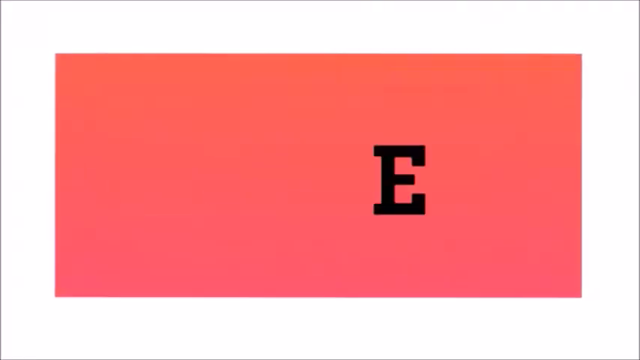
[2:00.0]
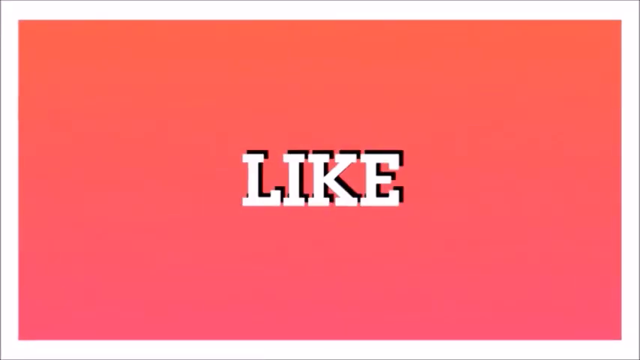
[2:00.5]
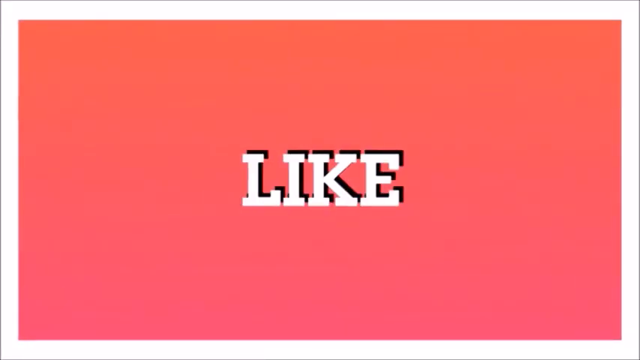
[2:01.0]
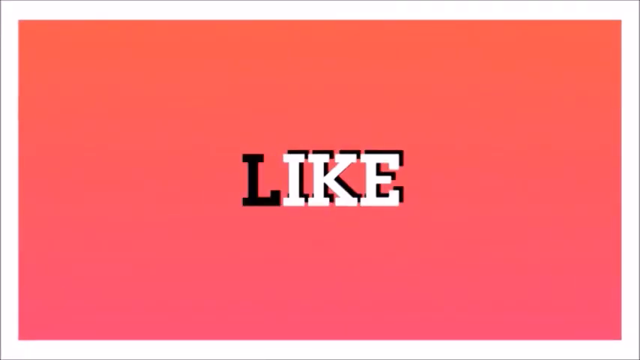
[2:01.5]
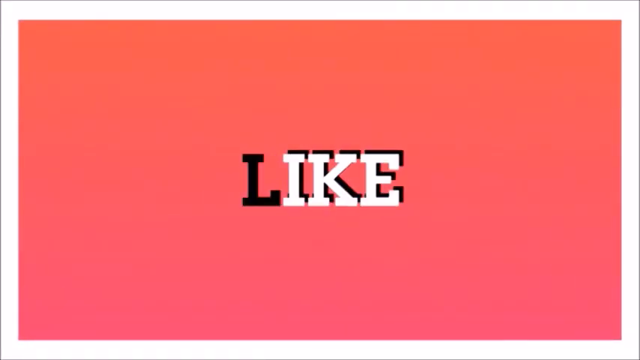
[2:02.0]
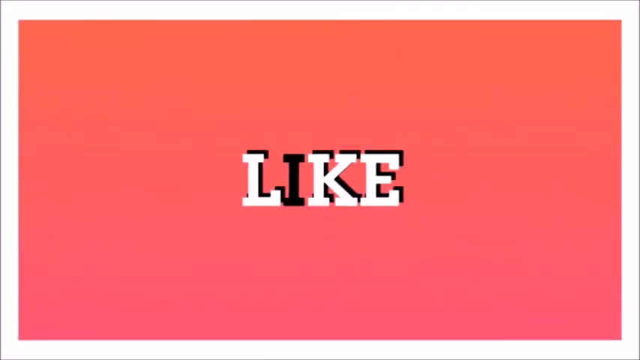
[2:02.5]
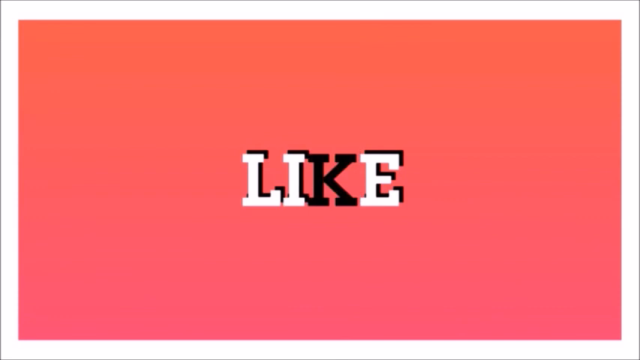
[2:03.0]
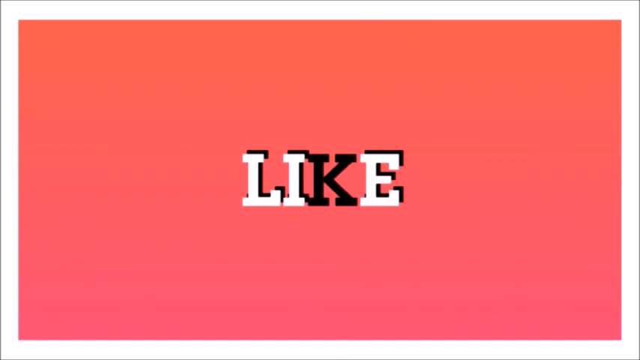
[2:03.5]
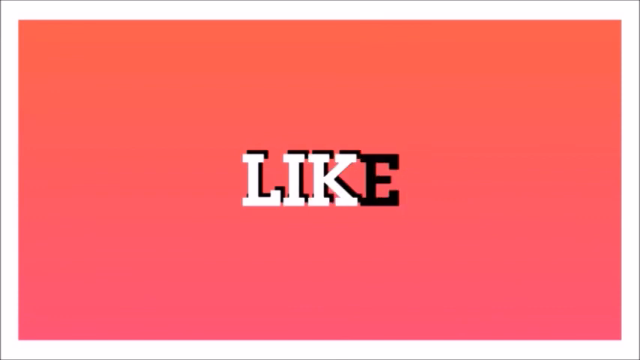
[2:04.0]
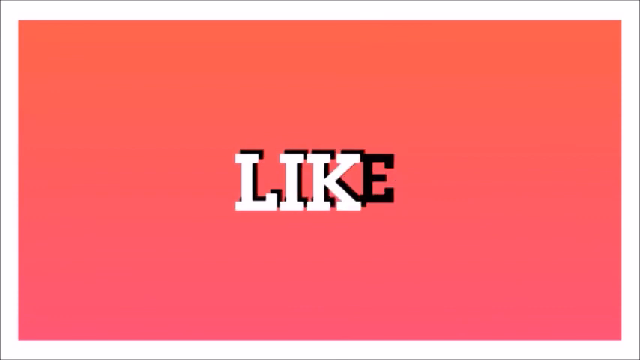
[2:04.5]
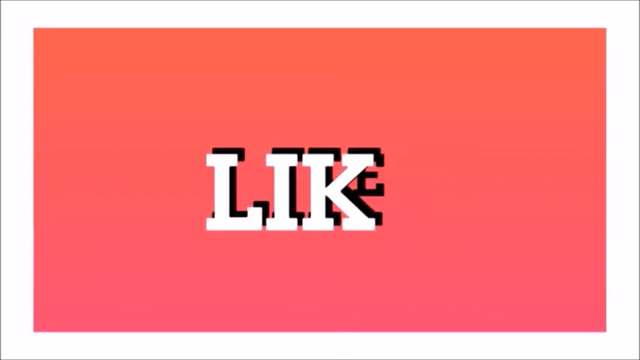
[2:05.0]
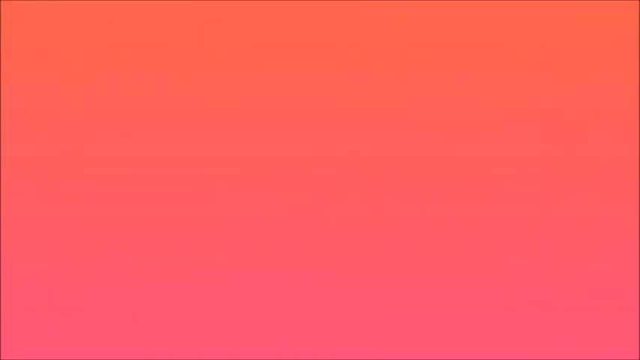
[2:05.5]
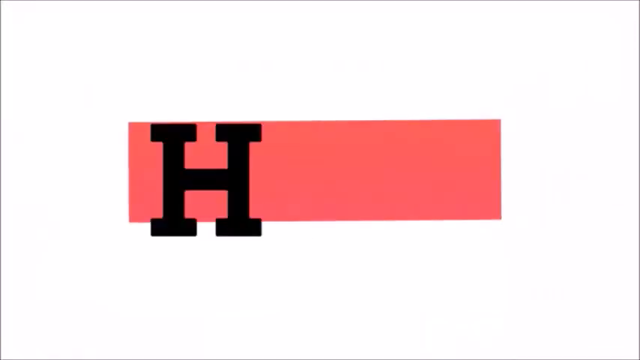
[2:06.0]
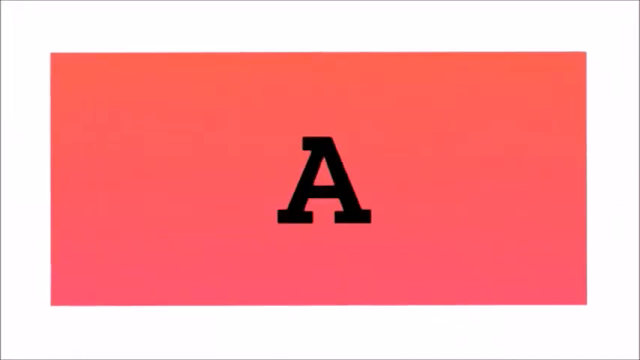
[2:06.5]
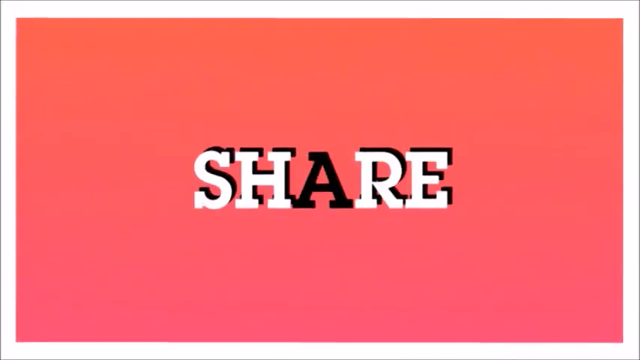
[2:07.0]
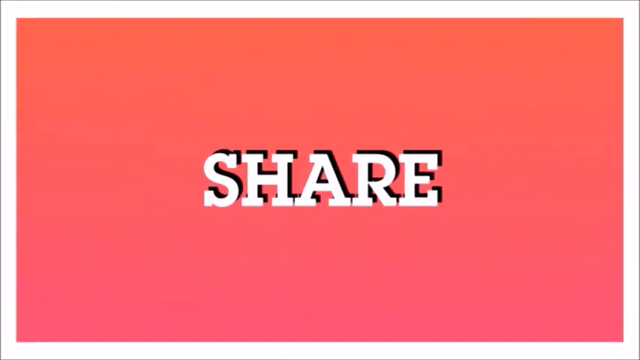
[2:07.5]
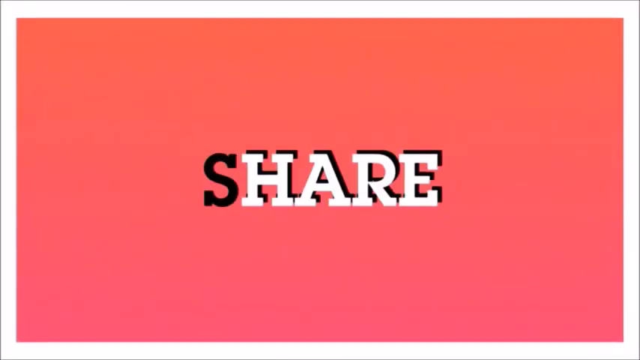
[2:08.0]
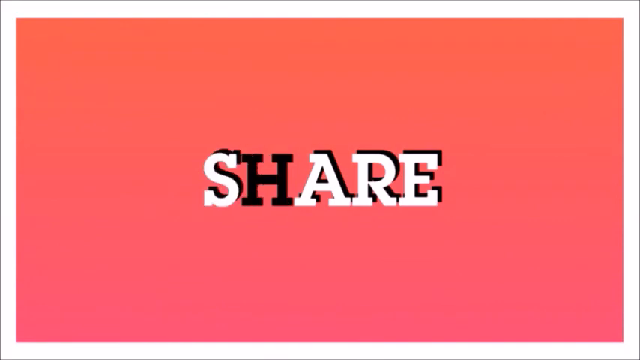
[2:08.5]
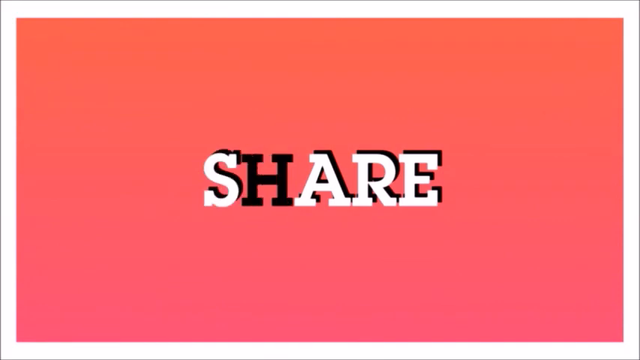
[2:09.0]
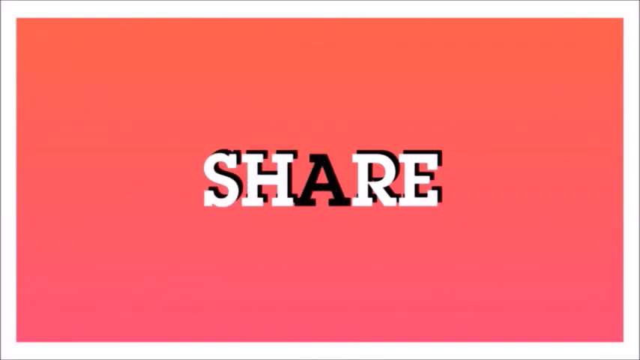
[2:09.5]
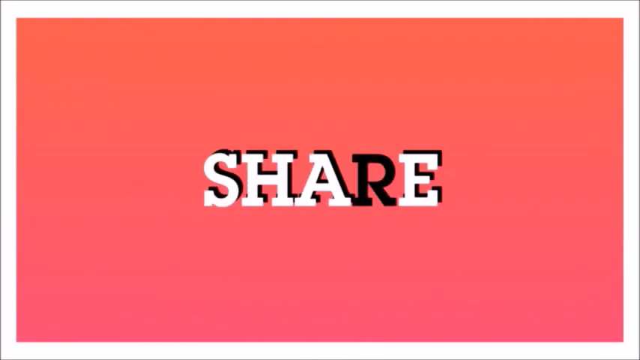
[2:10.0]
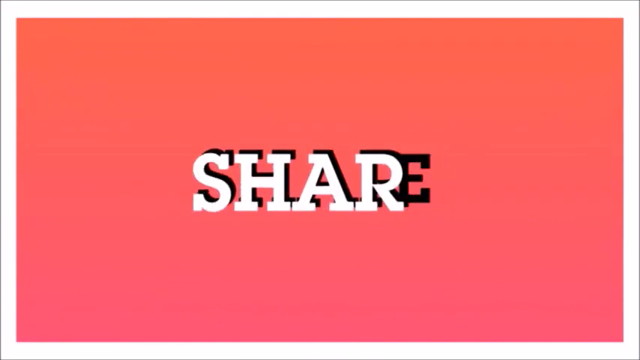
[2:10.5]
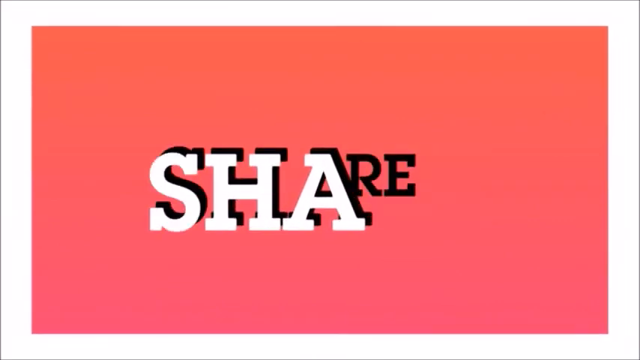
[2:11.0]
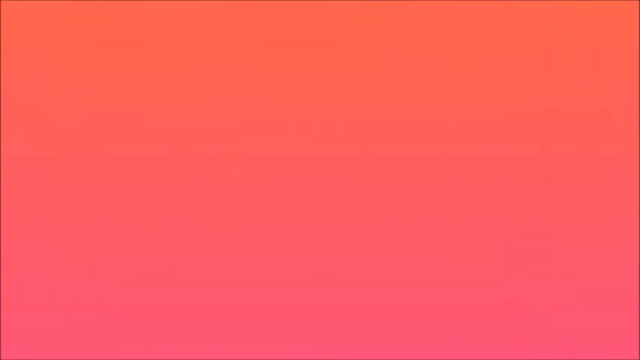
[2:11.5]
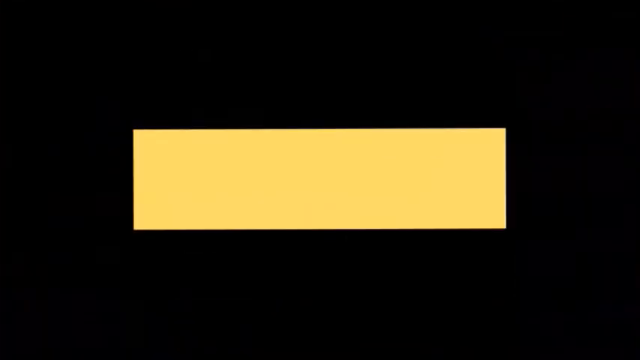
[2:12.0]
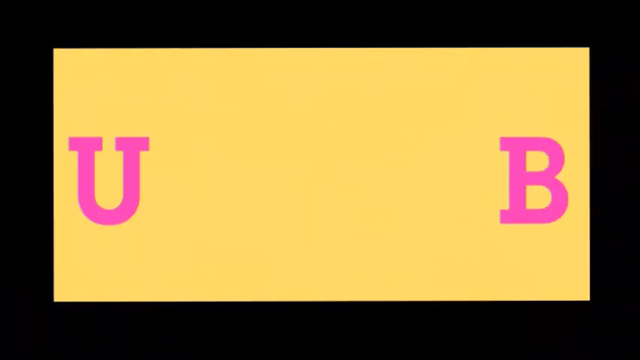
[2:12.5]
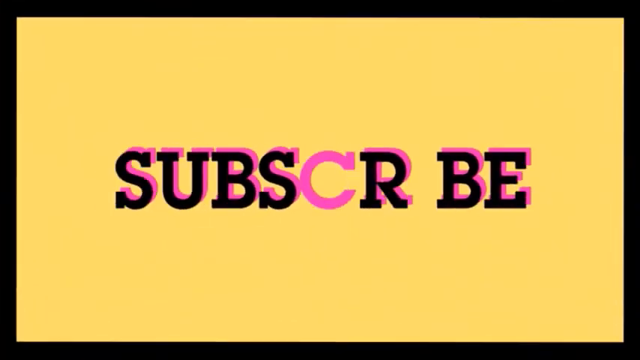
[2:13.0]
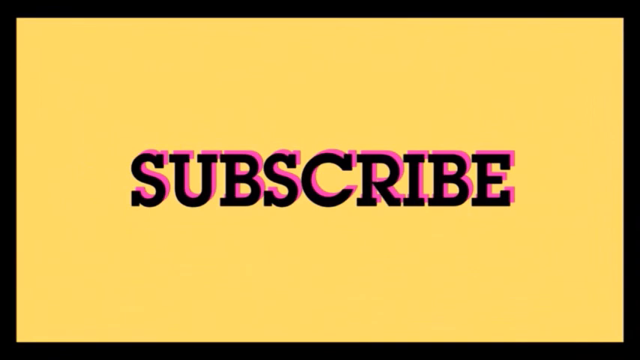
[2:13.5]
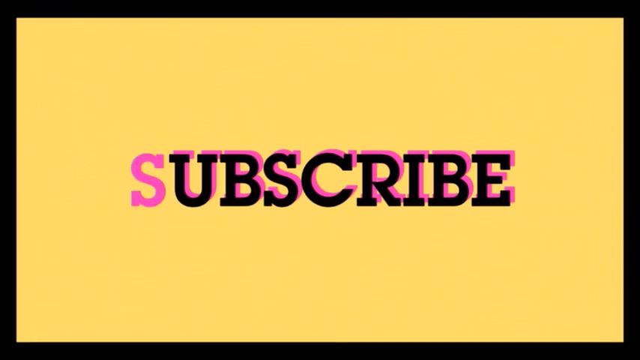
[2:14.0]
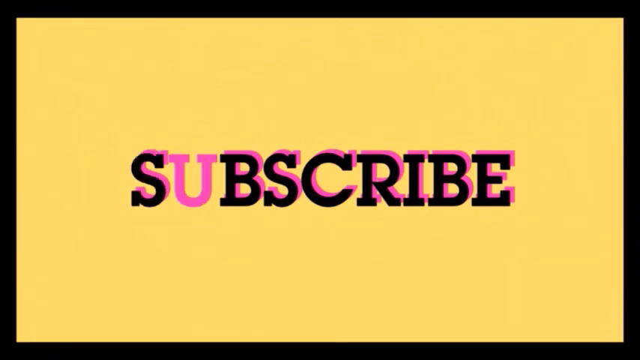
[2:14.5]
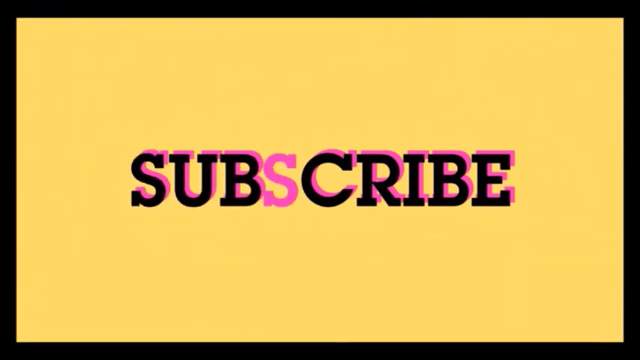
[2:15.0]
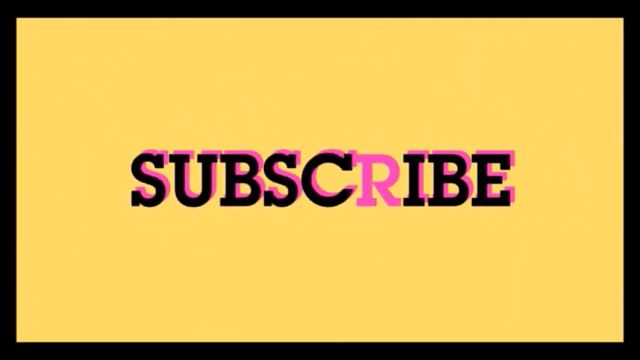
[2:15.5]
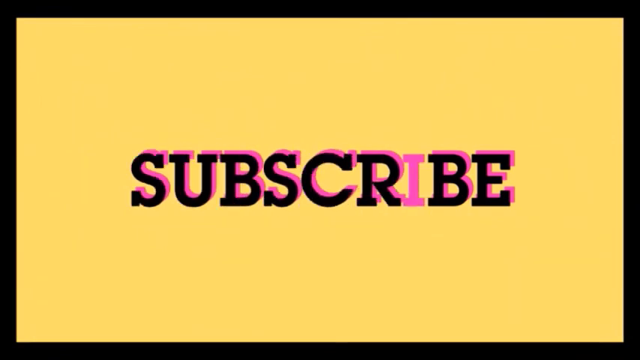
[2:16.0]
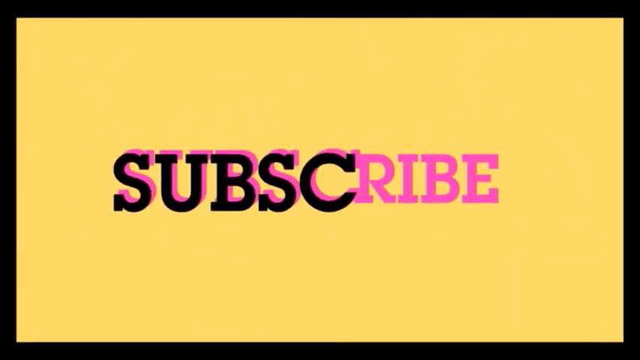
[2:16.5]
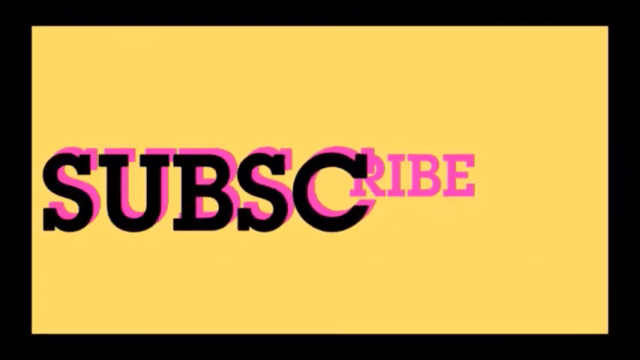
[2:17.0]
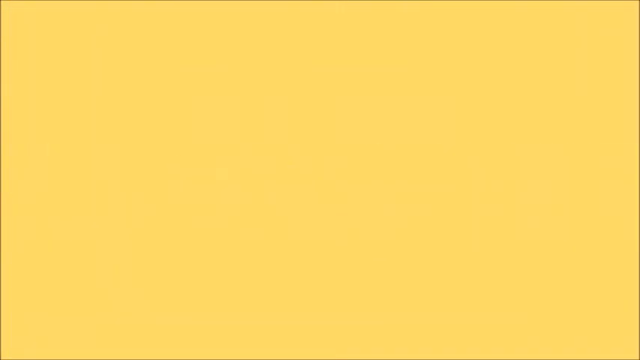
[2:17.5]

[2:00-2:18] The word "LIKE" appears in all caps, really big and white, and each individual letter is highlighted in black. The same happens with the word "SHARE", each letter highlighted in black. Then "SUBSCRIBE" appears; this time it is black rather than white, with a sort of violet shadow underneath it that makes it stand out from the other two, and each letter is highlighted with that same violet shadow. When the words disappear, there is a glitch effect where they kind of disappear and reappear on the left and right sides of each word, and they also zoom in toward the viewer.